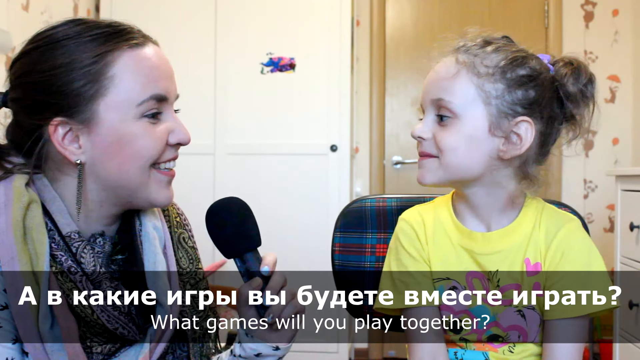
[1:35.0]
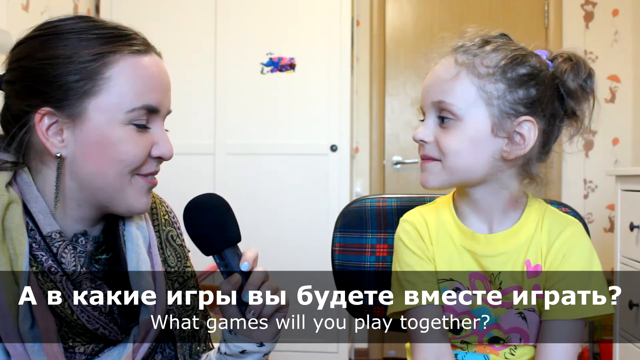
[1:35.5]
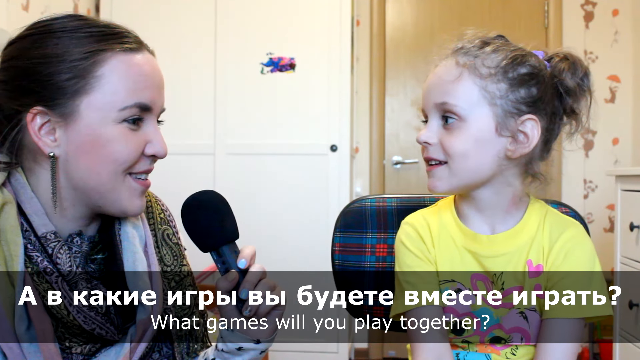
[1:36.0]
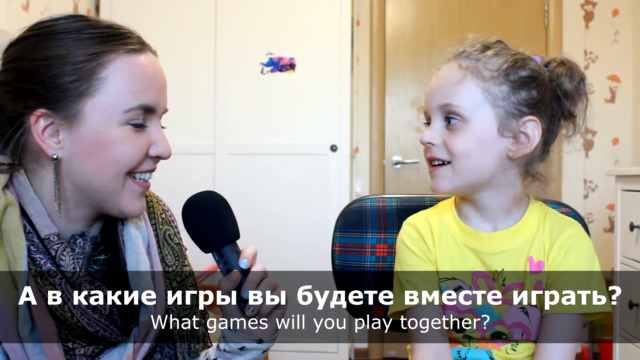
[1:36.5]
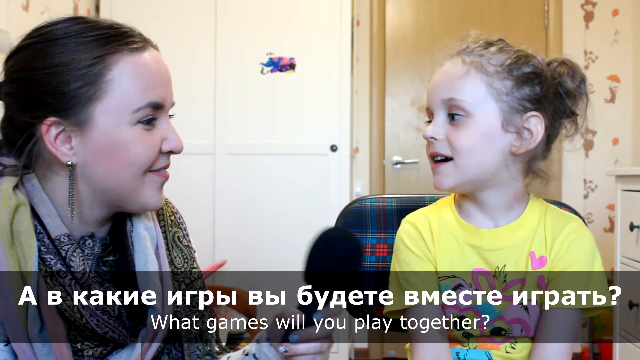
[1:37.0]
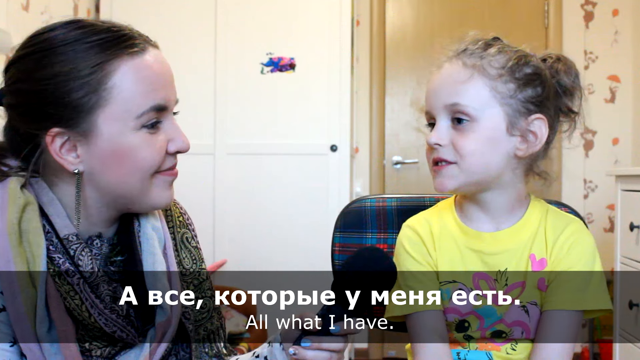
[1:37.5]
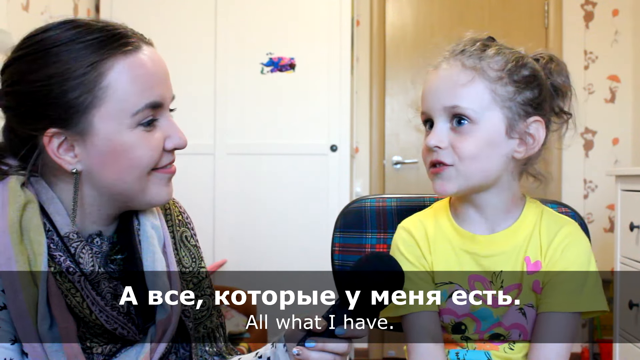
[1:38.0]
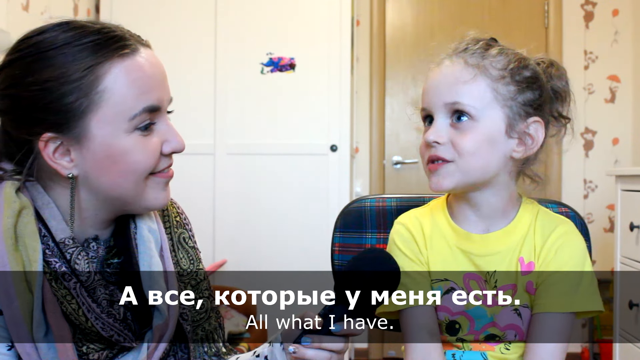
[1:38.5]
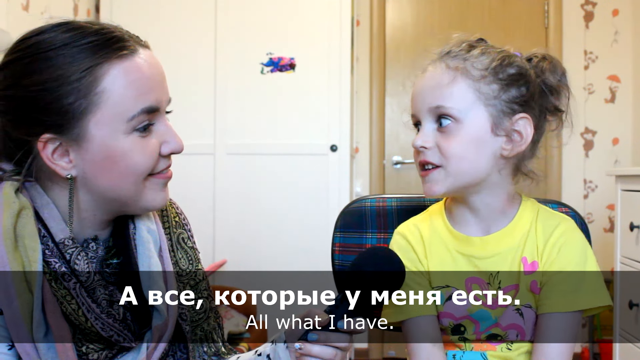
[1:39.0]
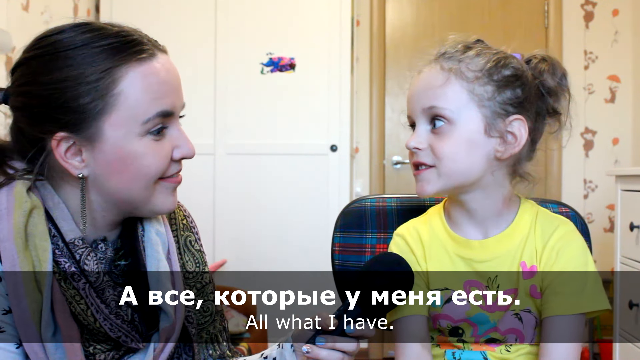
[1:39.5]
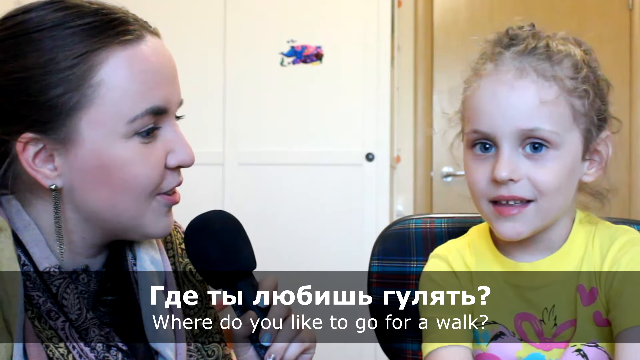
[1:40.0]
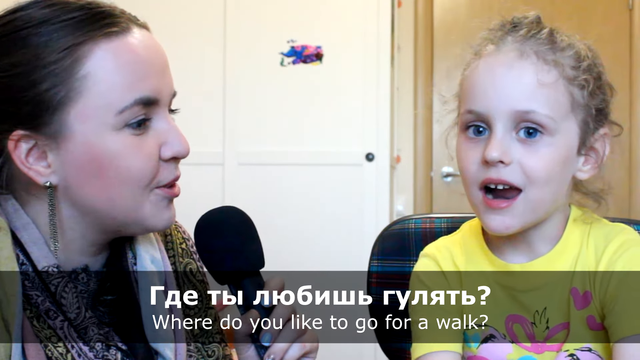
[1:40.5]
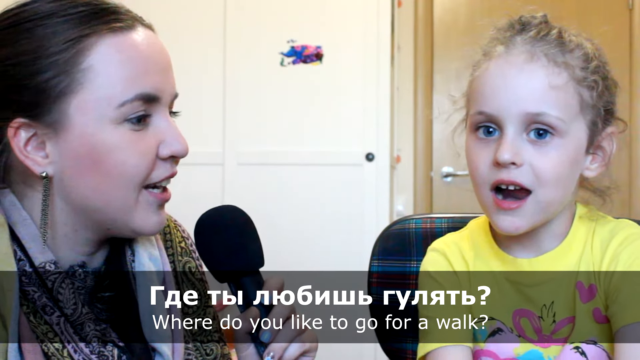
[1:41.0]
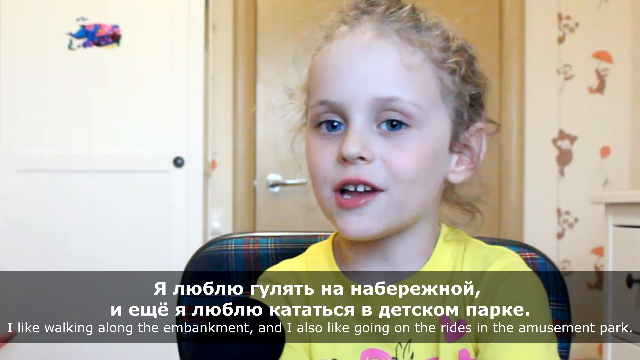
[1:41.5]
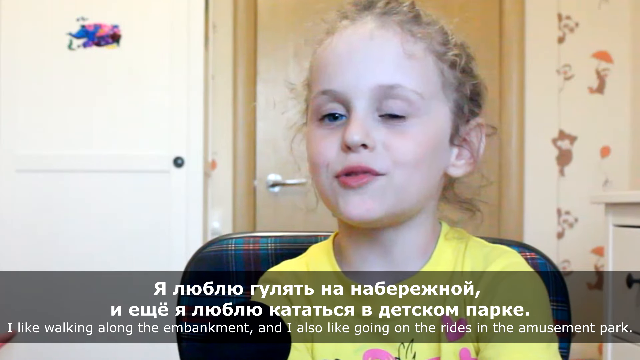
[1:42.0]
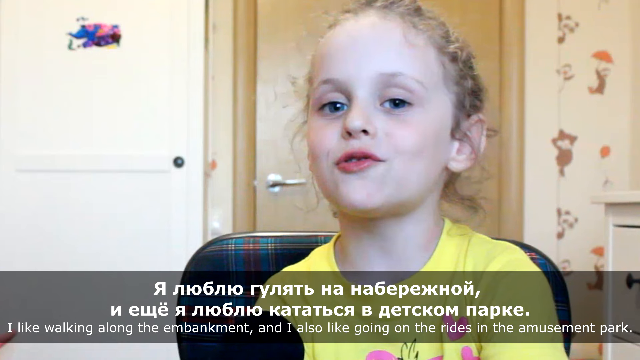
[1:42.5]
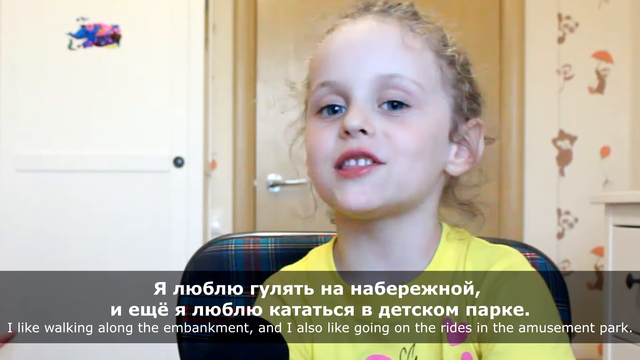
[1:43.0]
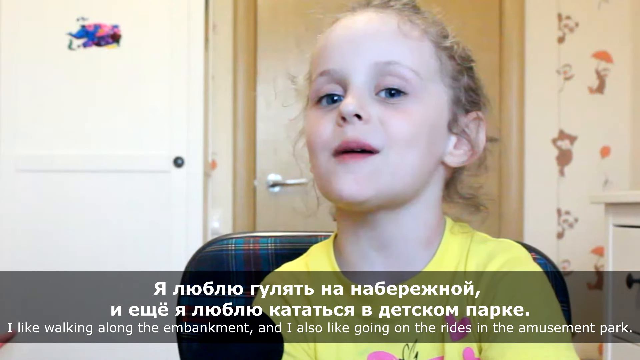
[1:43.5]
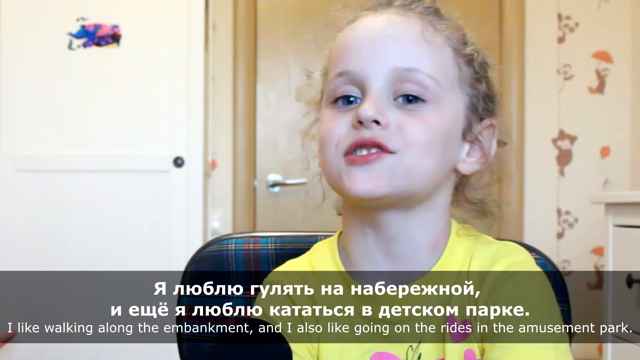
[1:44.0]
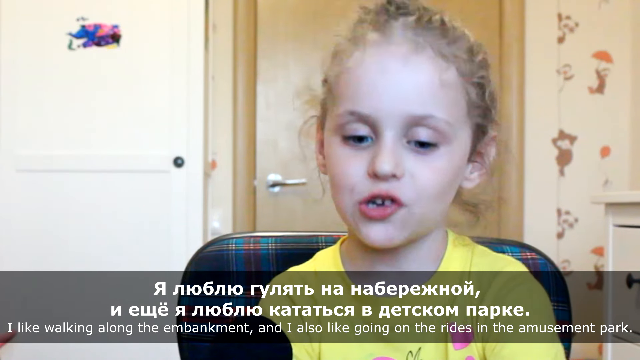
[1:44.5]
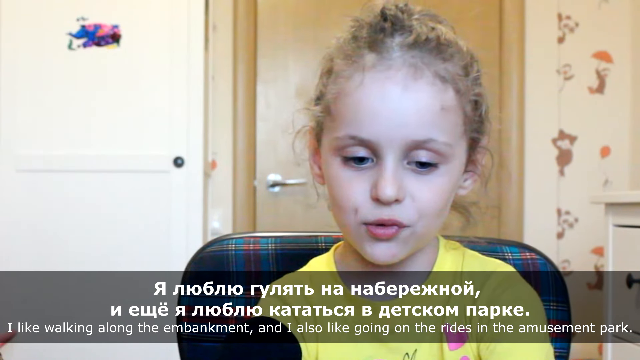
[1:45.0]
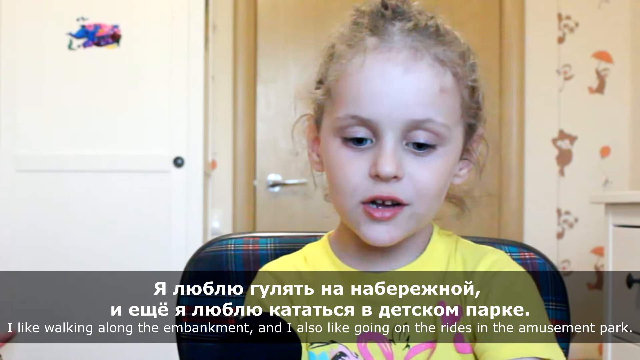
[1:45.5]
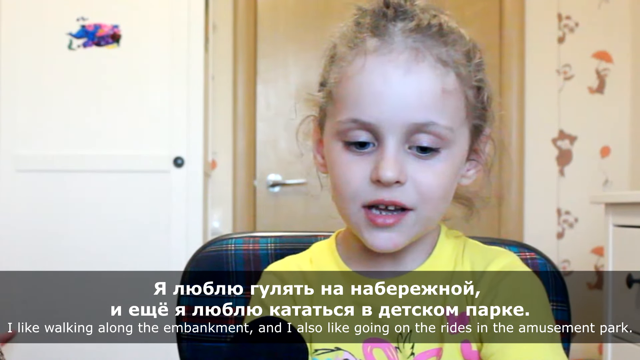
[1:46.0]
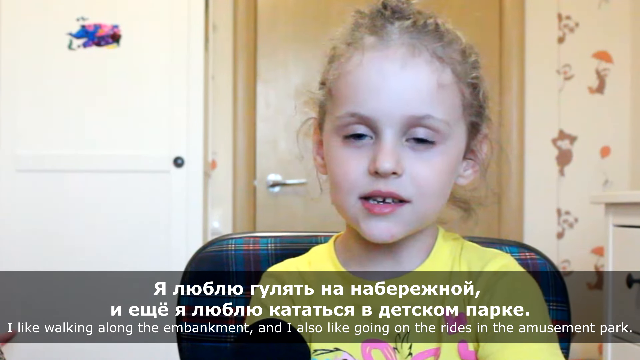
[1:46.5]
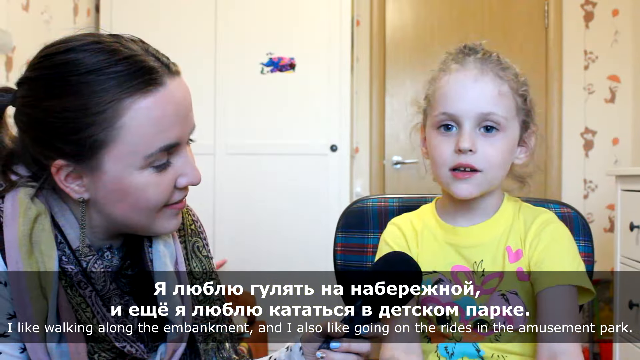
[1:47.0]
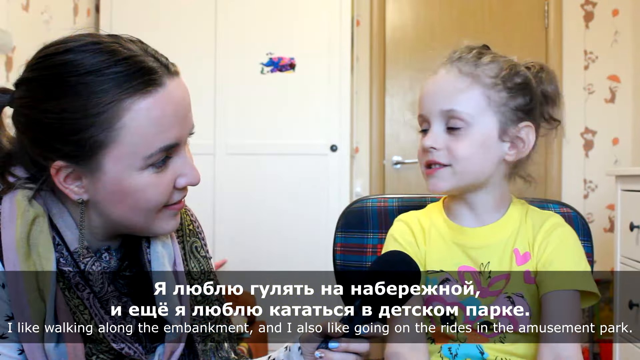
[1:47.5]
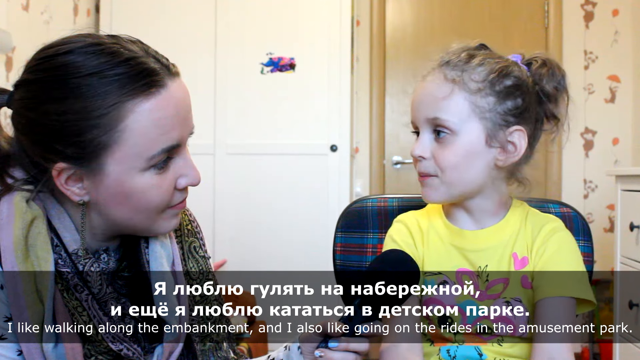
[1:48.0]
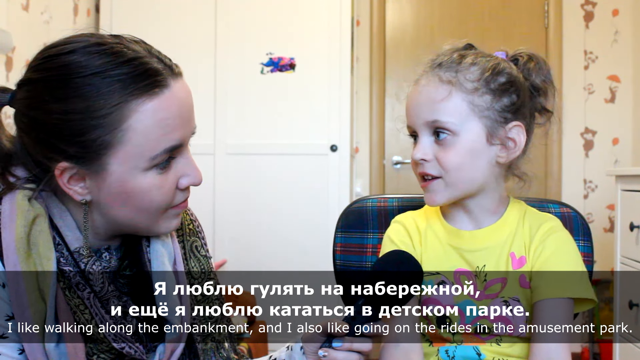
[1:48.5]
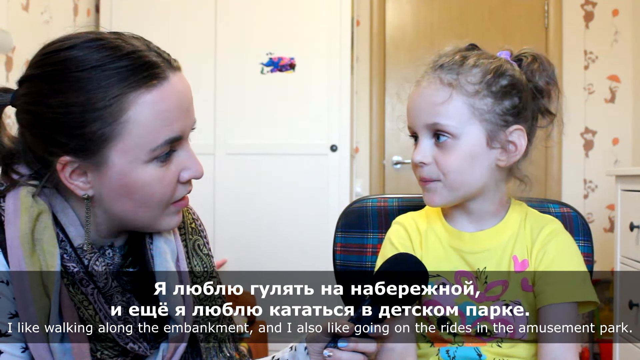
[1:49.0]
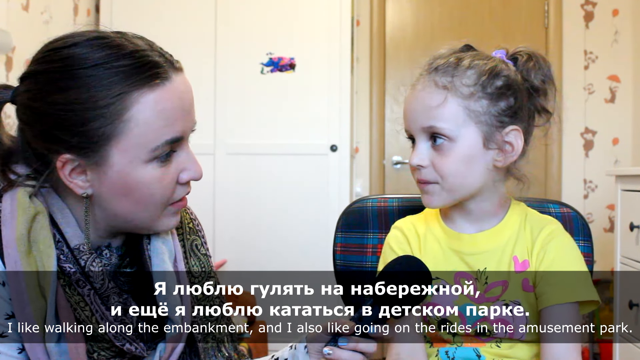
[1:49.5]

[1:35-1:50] The interview continues with talk of the girl and her baby sister. The woman asks what games they will play together, and the girl says, "all what I have." The woman asks where she likes to go for a walk, and the girl says she likes walking along the embankment and going on rides at the amusement park. At the very end, another question appears to begin in the subtitles but cuts out too quickly to read. The camera shows both of them at the beginning, focuses on just Ksyusha when she talks about the amusement park rides, and then cuts back to both of them side by side. The girl looks like she is thinking hard, especially about where she likes to walk, pausing and looking away. She wiggles a little, and the woman is patient and smiling as she asks questions; they still look like they are having a great time.